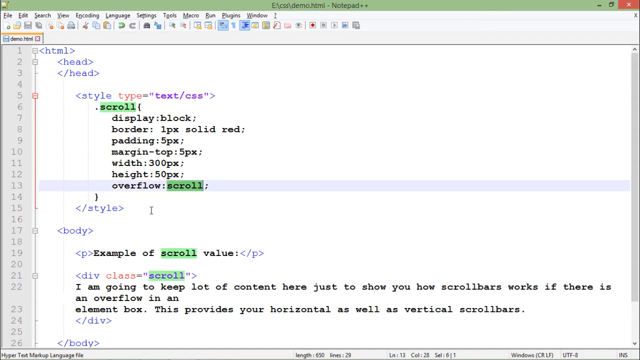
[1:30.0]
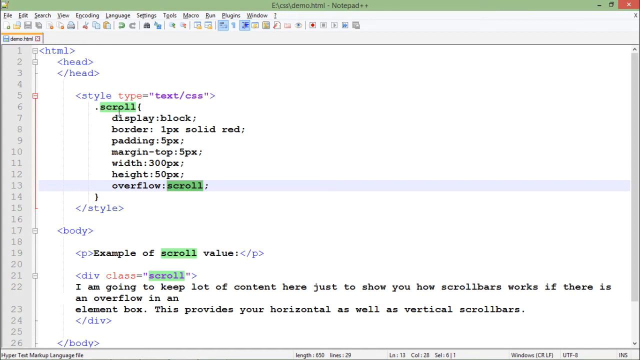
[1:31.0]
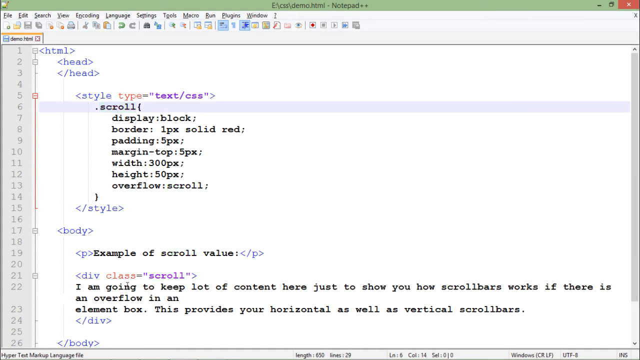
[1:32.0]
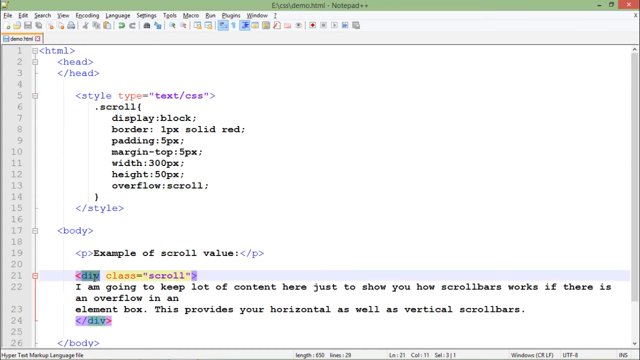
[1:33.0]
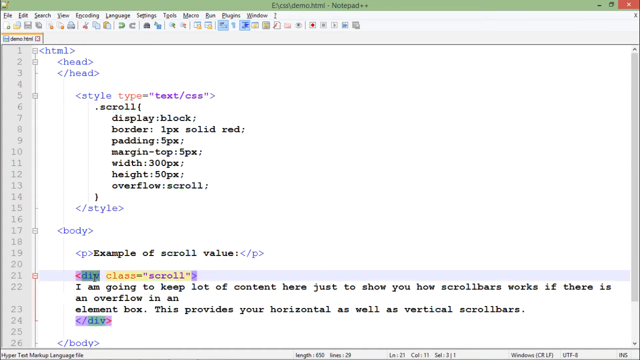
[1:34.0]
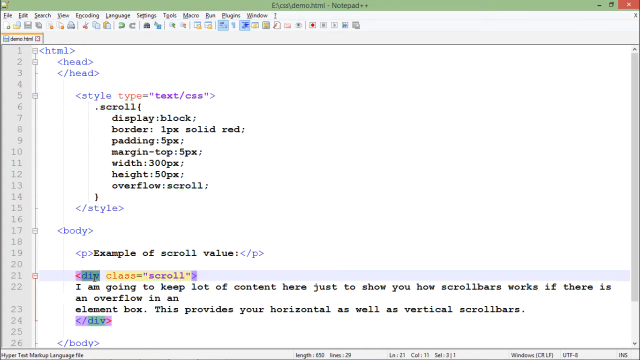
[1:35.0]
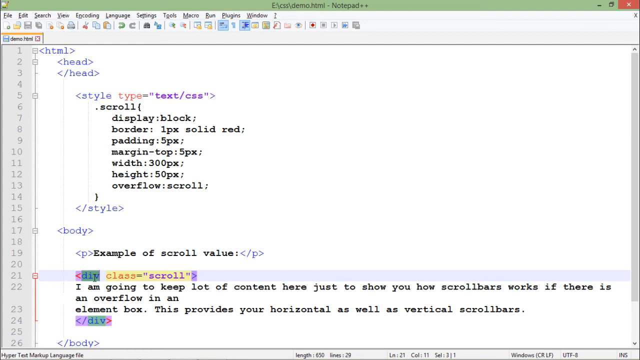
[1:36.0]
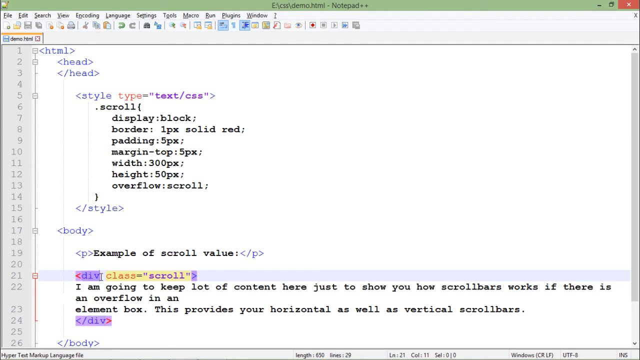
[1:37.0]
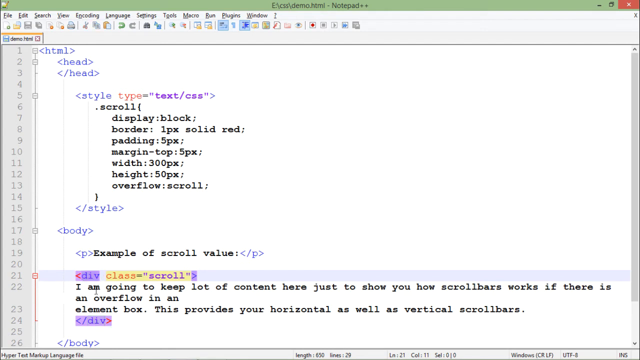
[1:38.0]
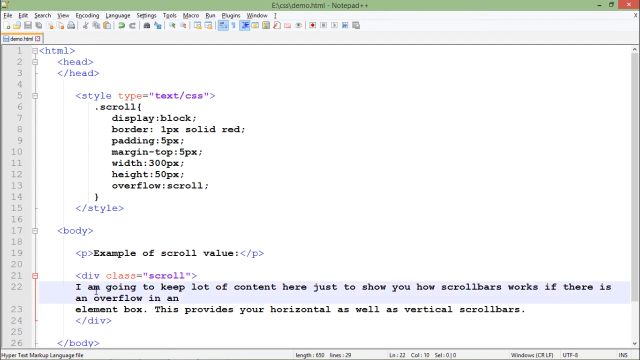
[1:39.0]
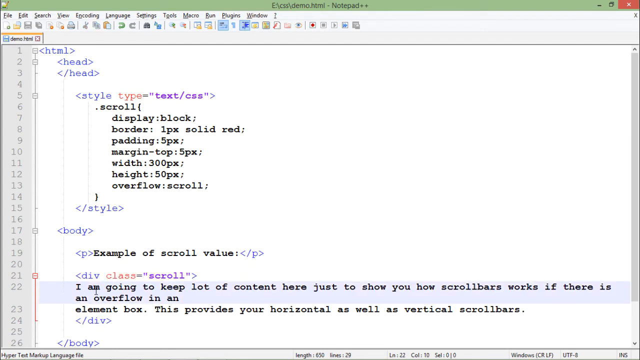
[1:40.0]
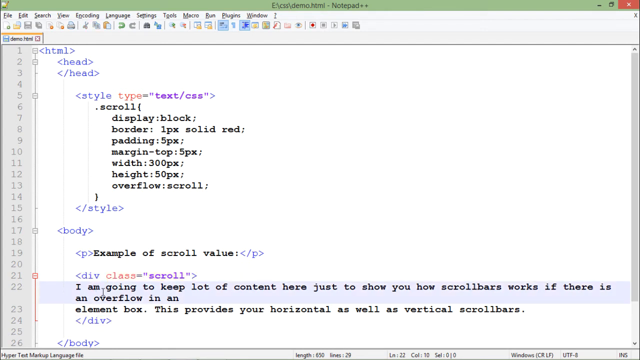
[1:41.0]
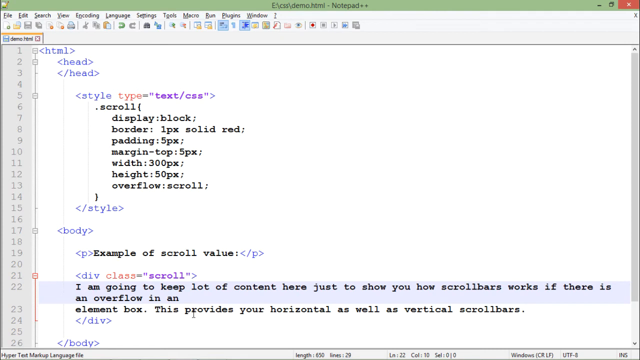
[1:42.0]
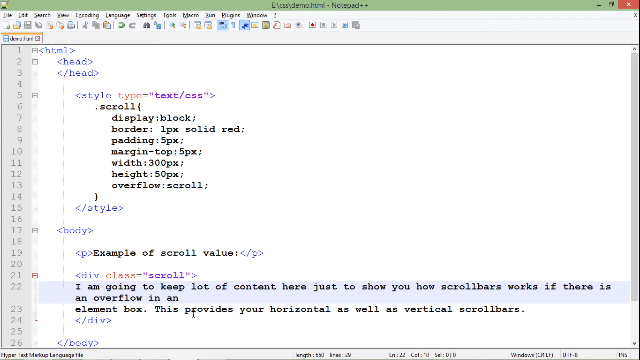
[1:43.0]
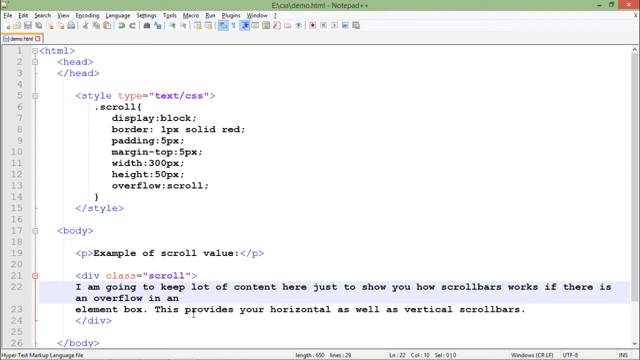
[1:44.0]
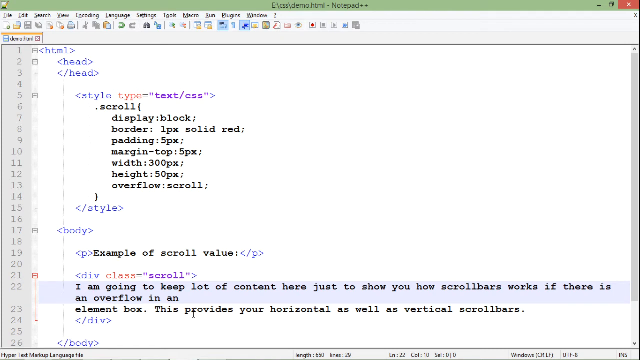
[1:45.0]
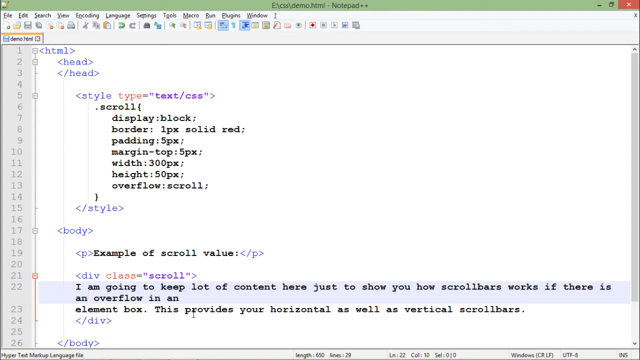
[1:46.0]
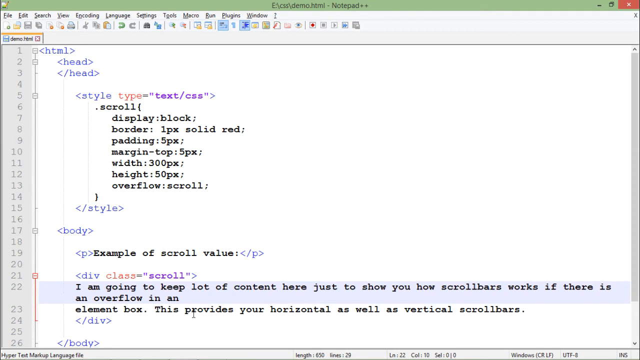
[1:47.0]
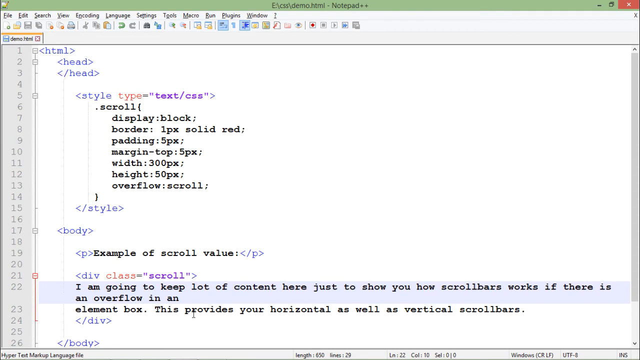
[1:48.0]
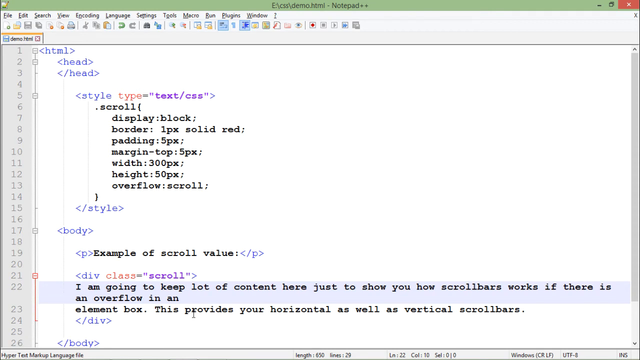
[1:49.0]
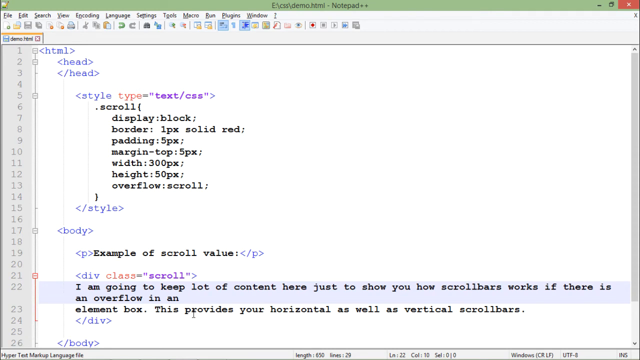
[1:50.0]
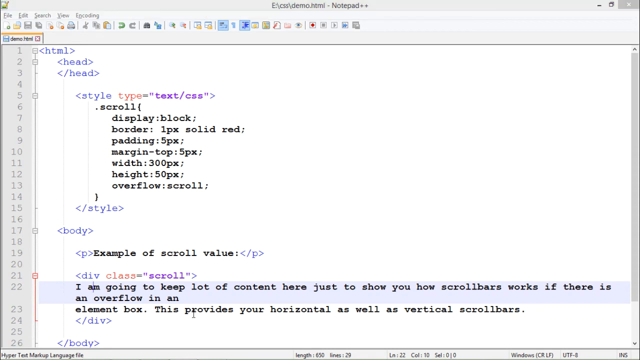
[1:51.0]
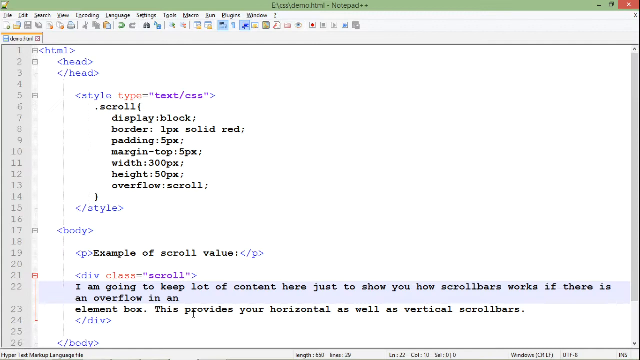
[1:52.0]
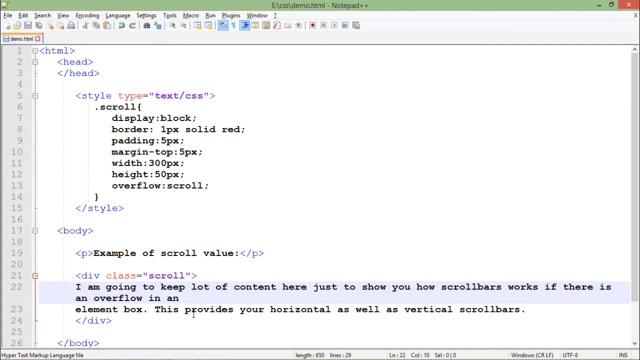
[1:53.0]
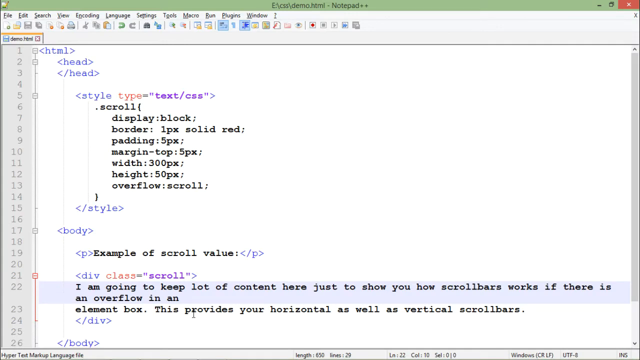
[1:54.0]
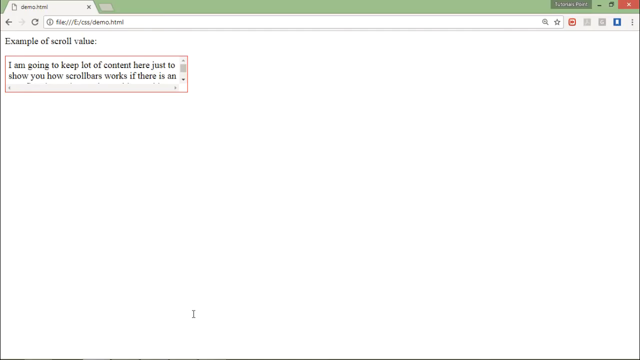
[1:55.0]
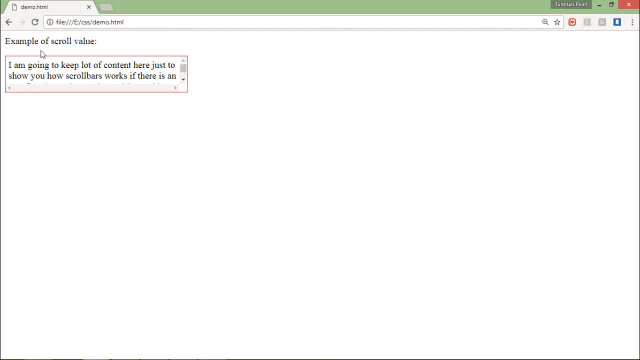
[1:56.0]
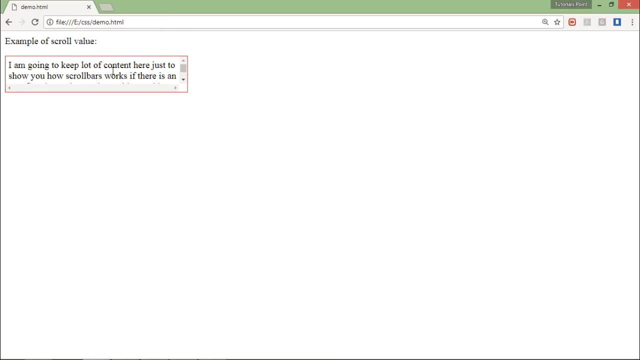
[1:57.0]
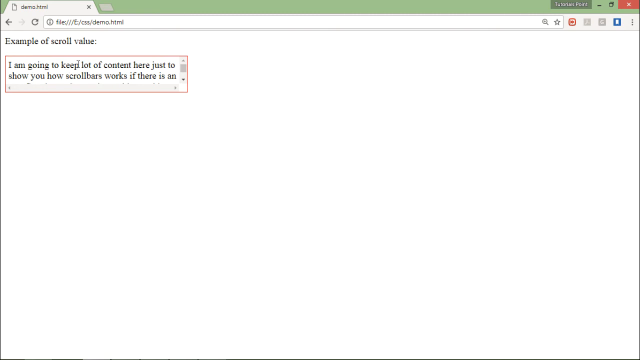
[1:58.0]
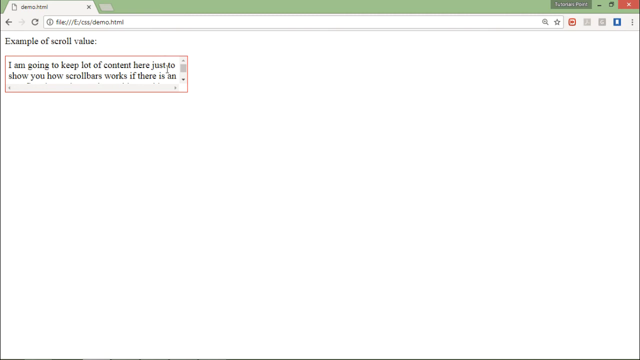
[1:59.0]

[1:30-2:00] The Notepad++ document is open to demo.html, showing HTML code: empty header tags at the top, style tags underneath with some CSS code, and body tags below that with some text in paragraph and div tags. The word scroll on lines 6, 13, 19 and 21 is highlighted with green boxes. The mouse clicks on scroll on line 6, which removes the highlight from all of them. The cursor then clicks on div on line 21, which highlights that div with a green box, along with the div in the closing tag on line 24. The user clicks elsewhere on the screen to remove the highlight. A browser then opens to the demo.html document, which has a white background. In the top left corner, in black text, it says "example of scroll value". Underneath is a framed rectangular box with text that says "I am going to keep a lot of content here just to show you how scroll bars works. If there is an", with a scroll bar on the right needed to scroll down to see the rest of the text. The cursor hovers over this box of text.